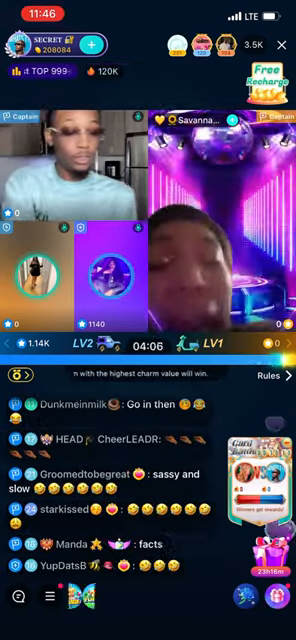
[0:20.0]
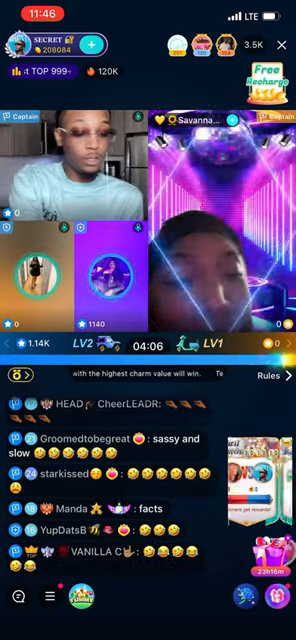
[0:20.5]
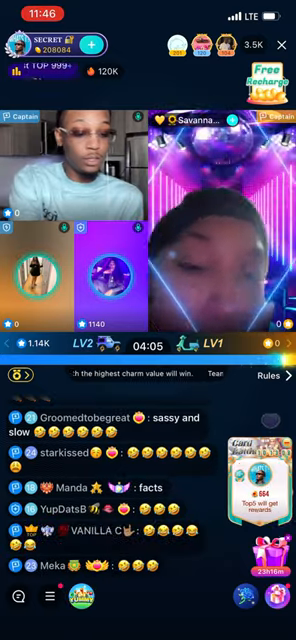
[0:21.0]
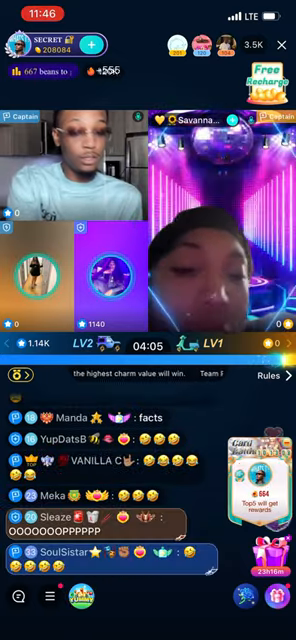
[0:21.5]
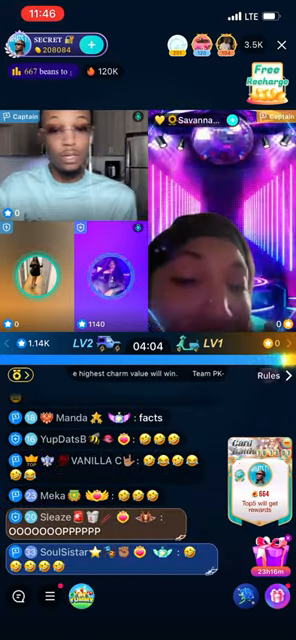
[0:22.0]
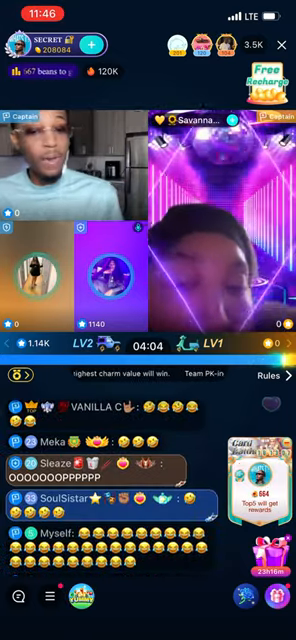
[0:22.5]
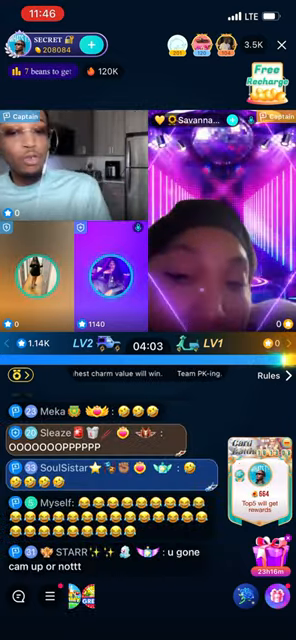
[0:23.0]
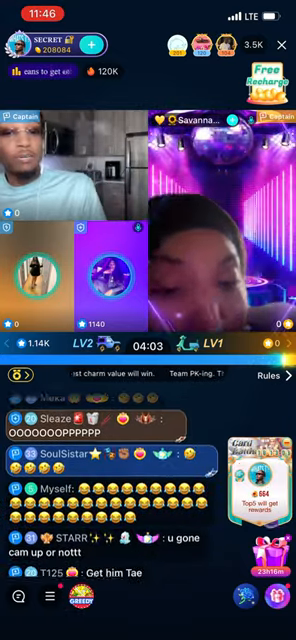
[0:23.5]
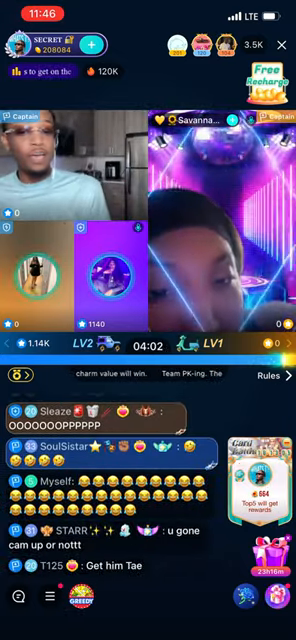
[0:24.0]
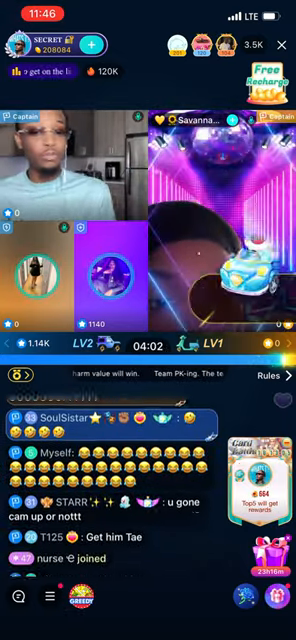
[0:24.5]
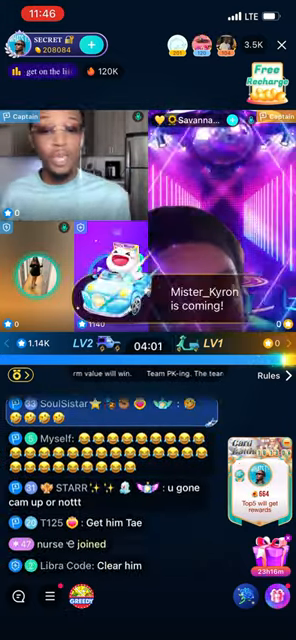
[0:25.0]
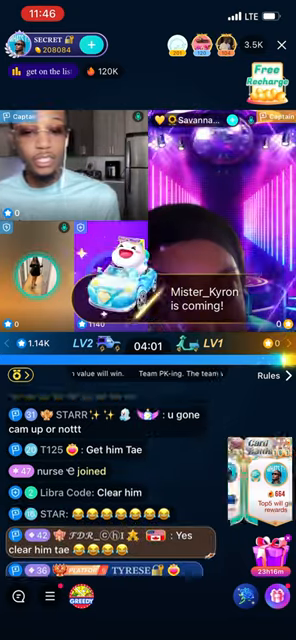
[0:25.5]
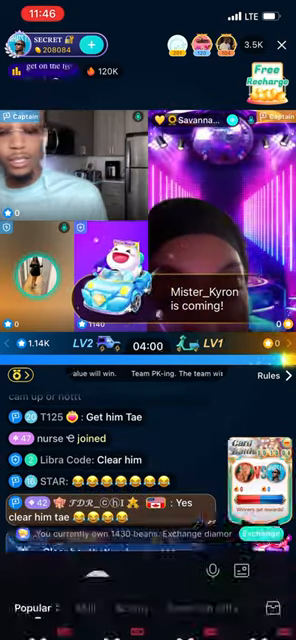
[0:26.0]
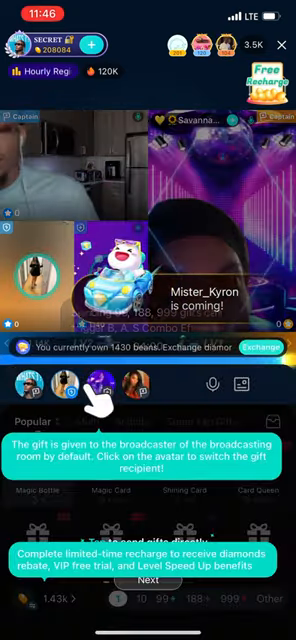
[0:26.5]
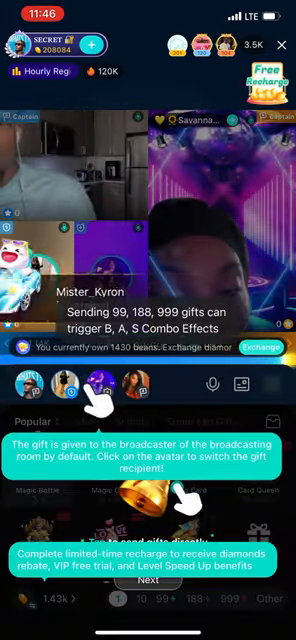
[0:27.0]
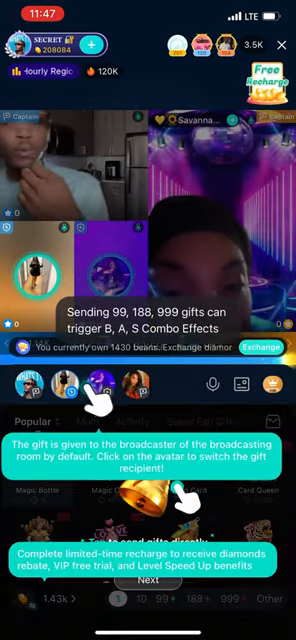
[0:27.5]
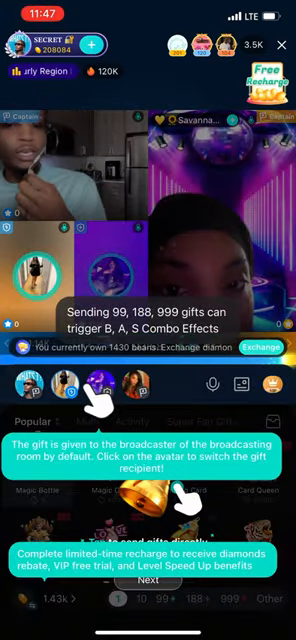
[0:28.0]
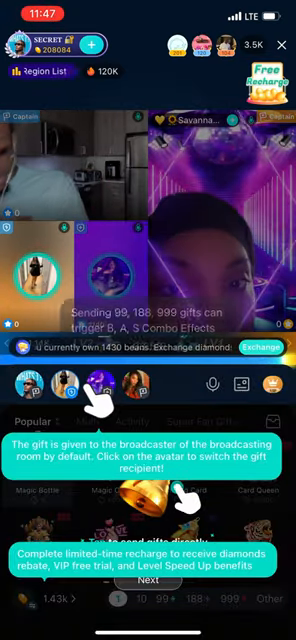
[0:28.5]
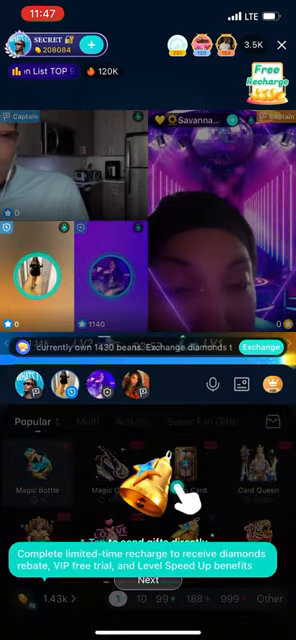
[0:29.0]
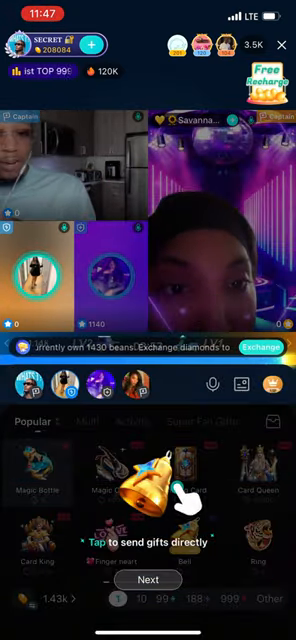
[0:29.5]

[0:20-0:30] Both players speak to each other in an animated way. A character in a car flashes on the screen with the text "character_chiron is coming!" Present icons then appear at the bottom of the screen under the header "popular", including various cards, a magic bottle, a shining card, a card king, a ring and a card queen. Gifts are sent to the different players, with text reading "complete limited time recharge to receive diamonds". The level speed-up is shown. A flaming icon at the top of the screen says "120,000", and "top 999" also appears at the top. At the bottom of the screen a different card is shown as applied, with a present gift at the bottom.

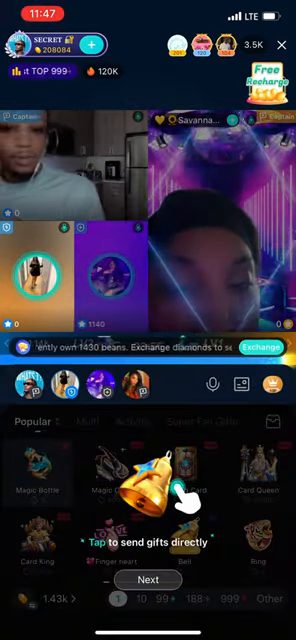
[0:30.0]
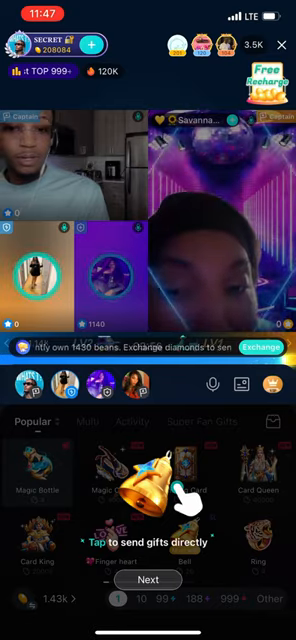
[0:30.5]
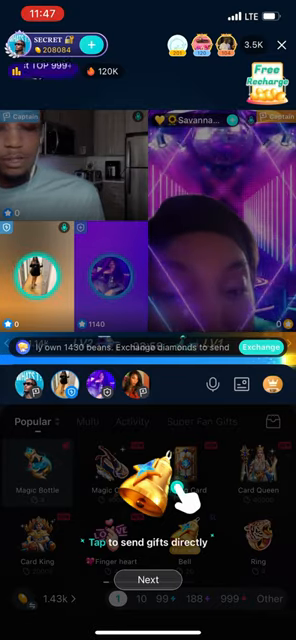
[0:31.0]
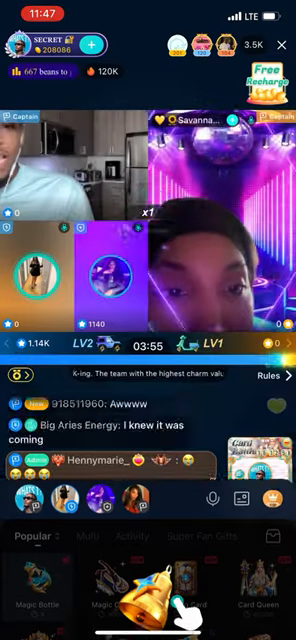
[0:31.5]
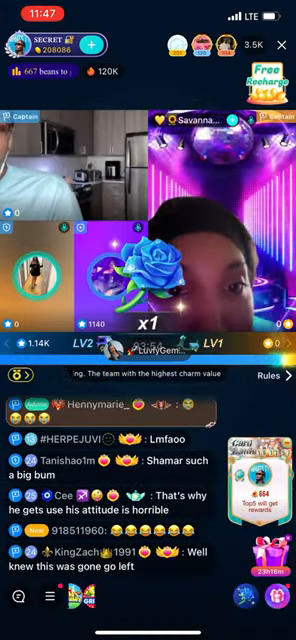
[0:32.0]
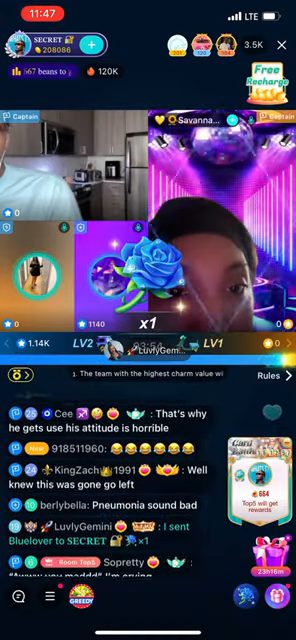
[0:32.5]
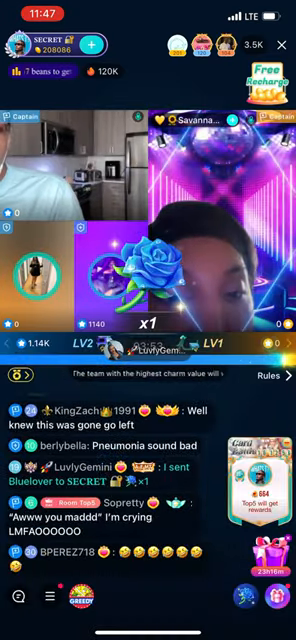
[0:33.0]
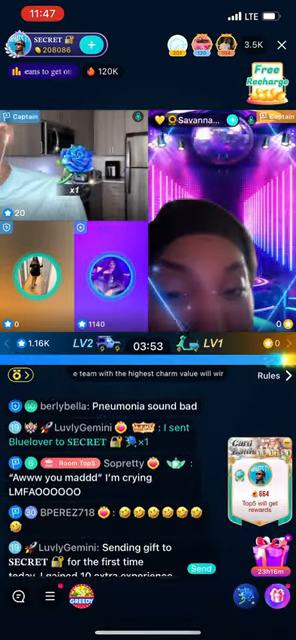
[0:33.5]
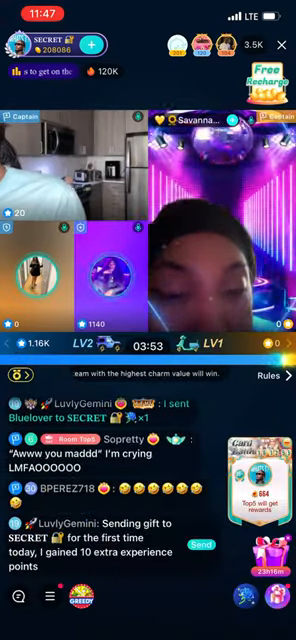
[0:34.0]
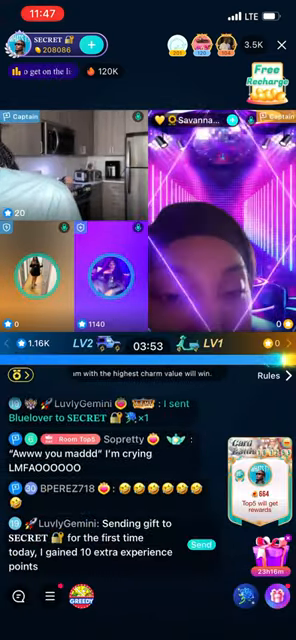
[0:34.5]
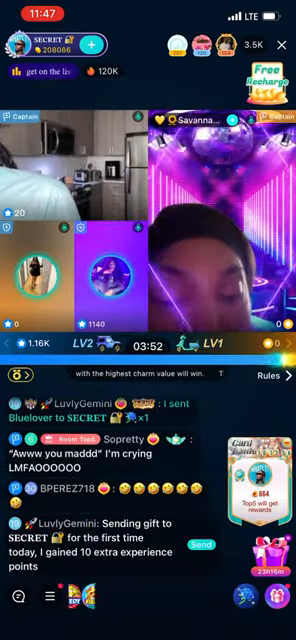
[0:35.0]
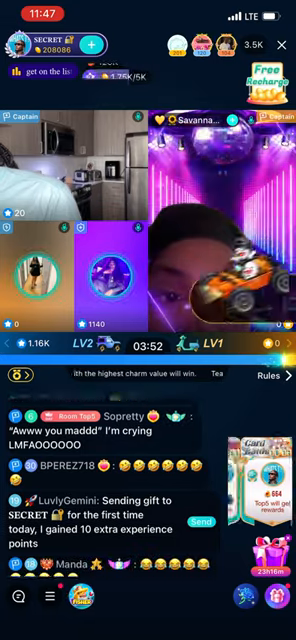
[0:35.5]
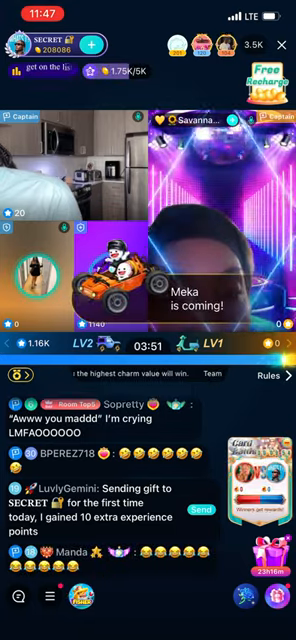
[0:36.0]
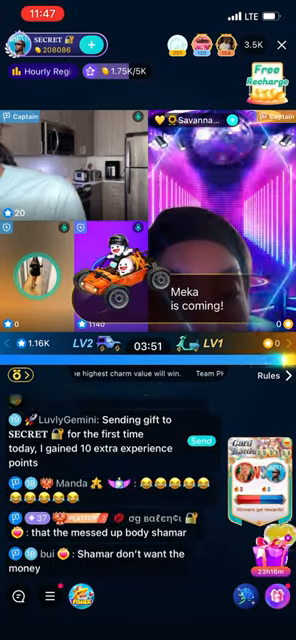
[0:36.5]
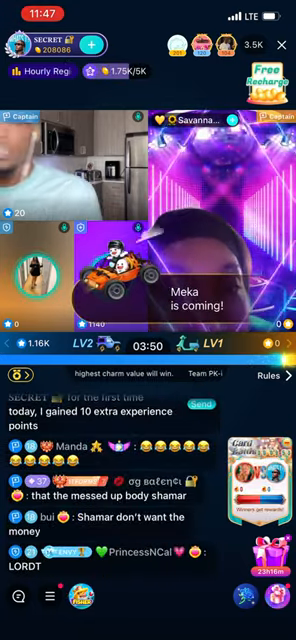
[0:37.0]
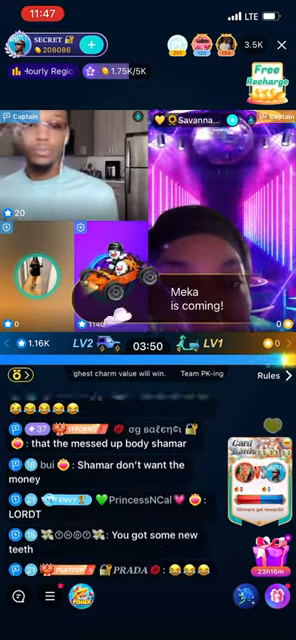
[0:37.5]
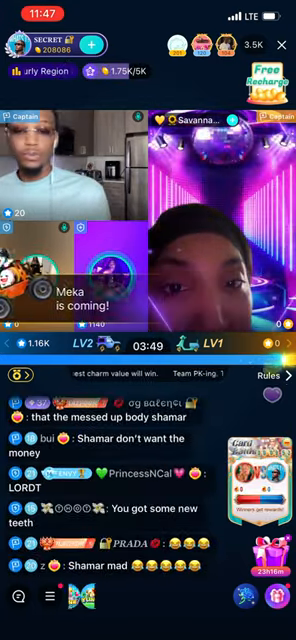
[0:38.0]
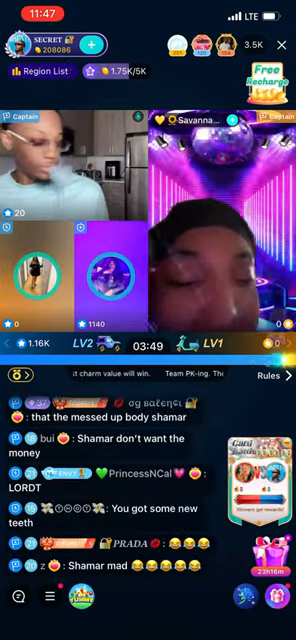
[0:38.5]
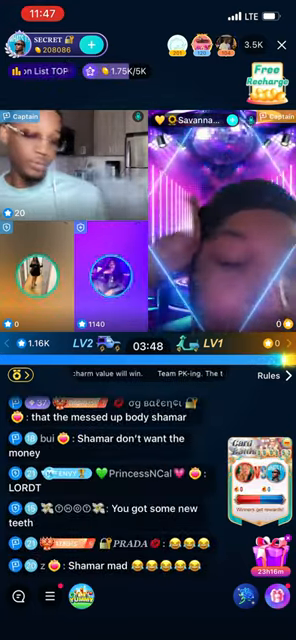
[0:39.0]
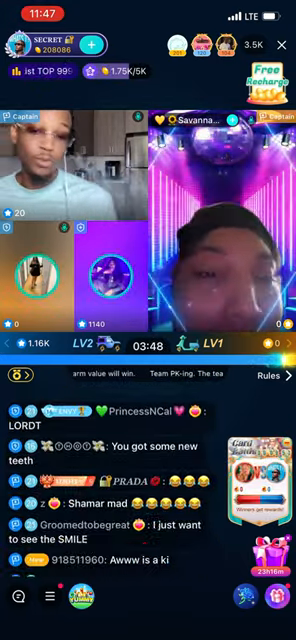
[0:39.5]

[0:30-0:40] A bell icon appears on the bottom toolbar with the text "tap to send gifts directly", and a big hand clicks it. A rose is displayed with a times 1 label, then moves to the video of the man in the top left part of the screen, showing it being awarded to him. Next, the text "Mika is coming!" appears with two characters riding in an orange buggy. Members in the chat react, with messages such as "sending gift to secret for the first time" and "today I gained 10 extra experience points".